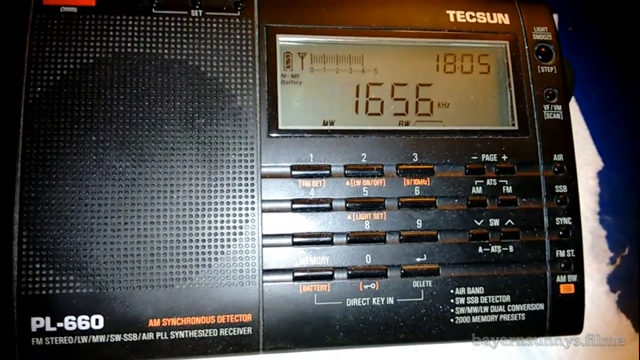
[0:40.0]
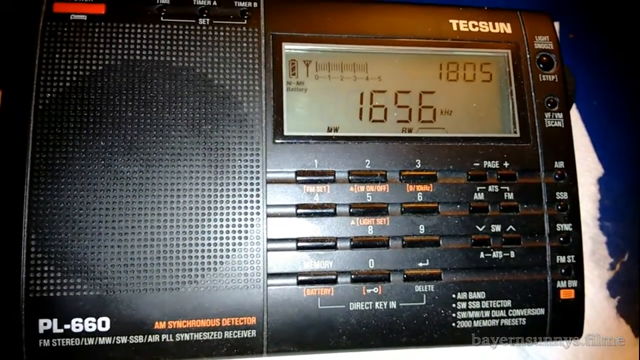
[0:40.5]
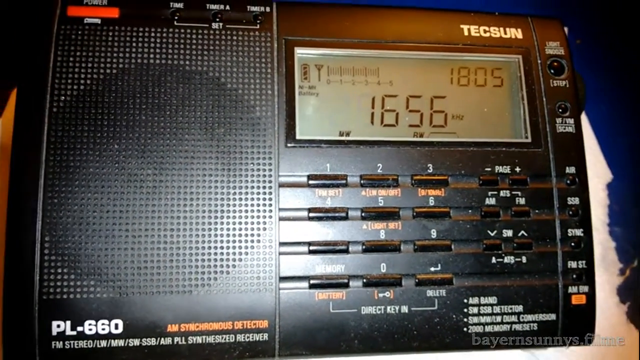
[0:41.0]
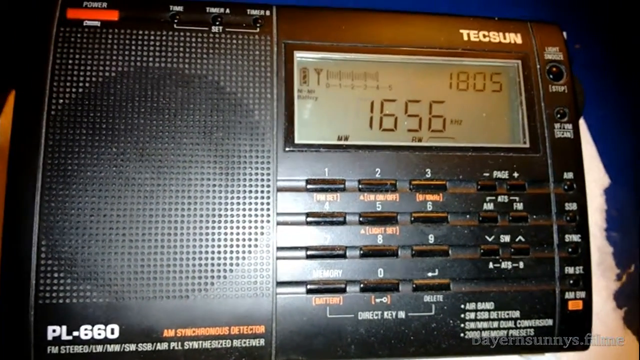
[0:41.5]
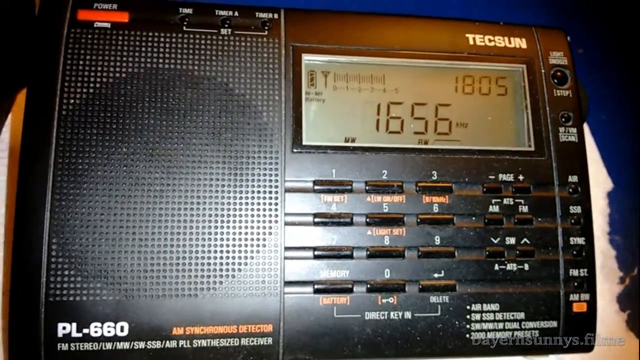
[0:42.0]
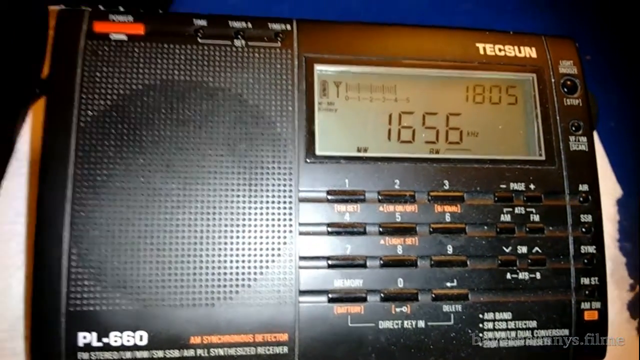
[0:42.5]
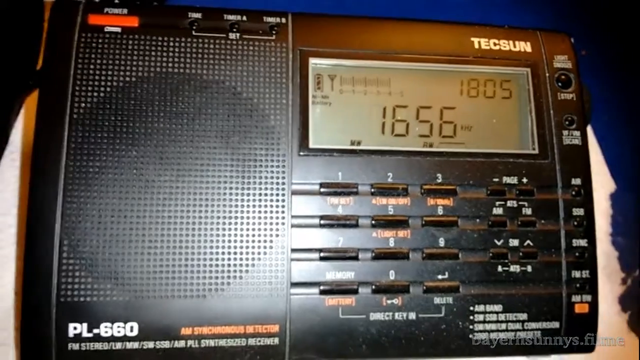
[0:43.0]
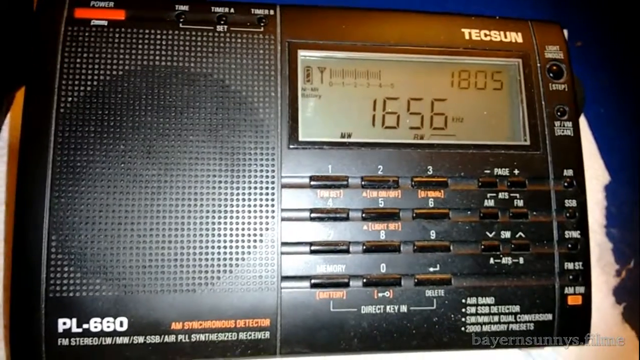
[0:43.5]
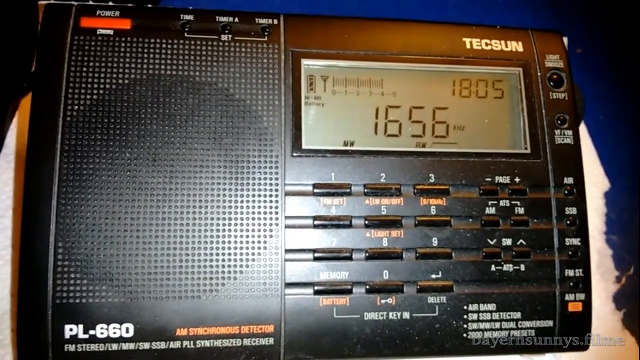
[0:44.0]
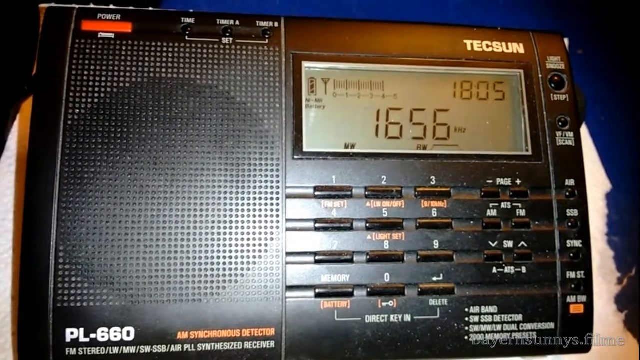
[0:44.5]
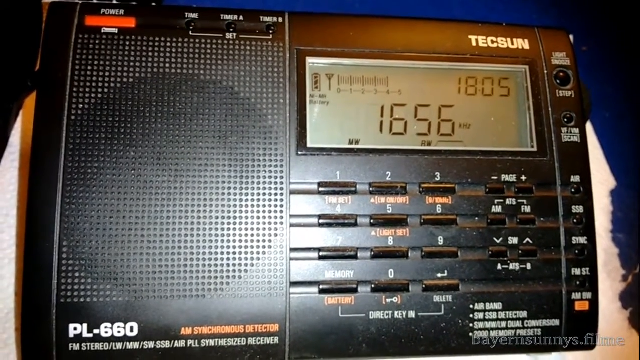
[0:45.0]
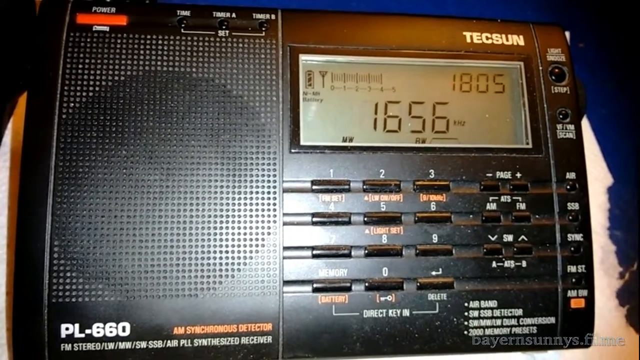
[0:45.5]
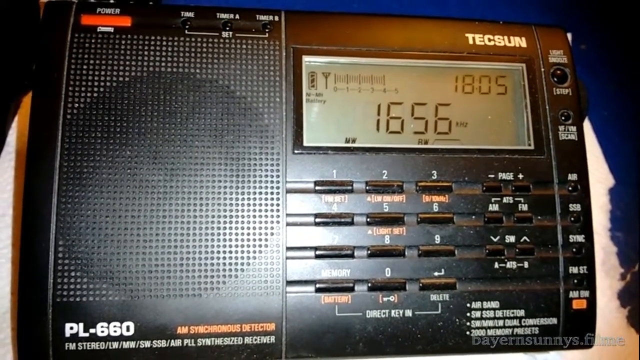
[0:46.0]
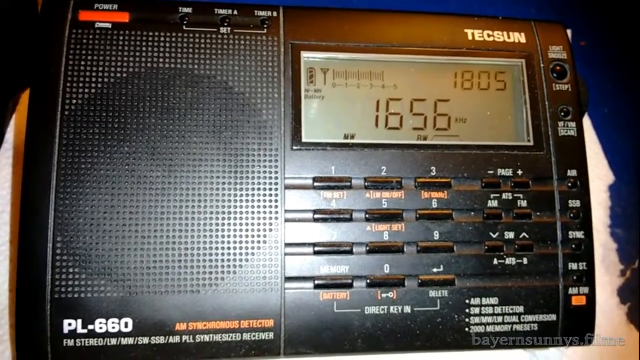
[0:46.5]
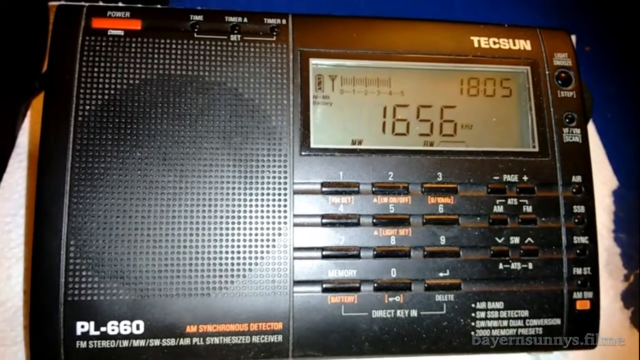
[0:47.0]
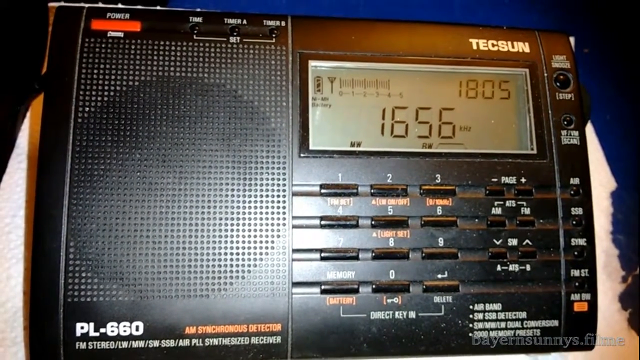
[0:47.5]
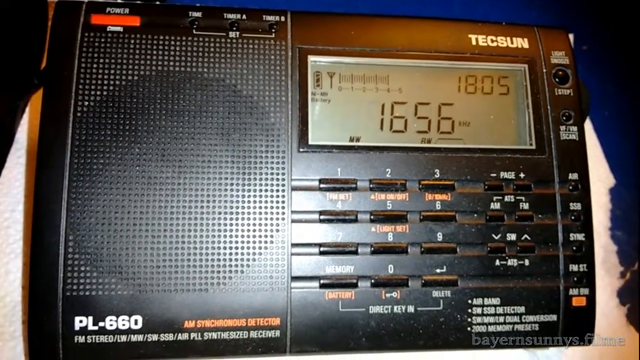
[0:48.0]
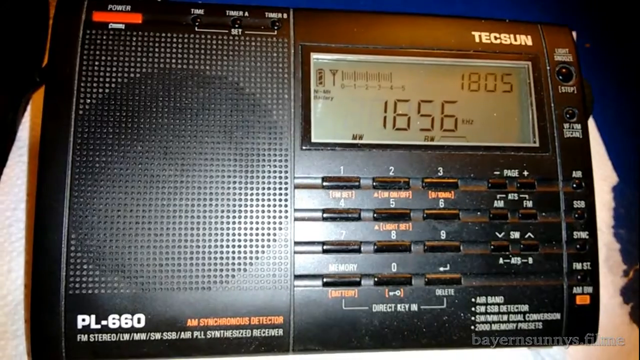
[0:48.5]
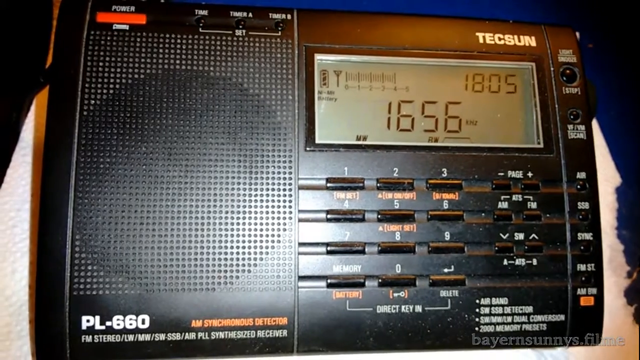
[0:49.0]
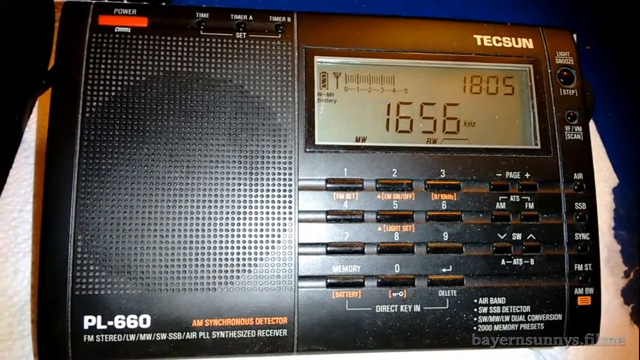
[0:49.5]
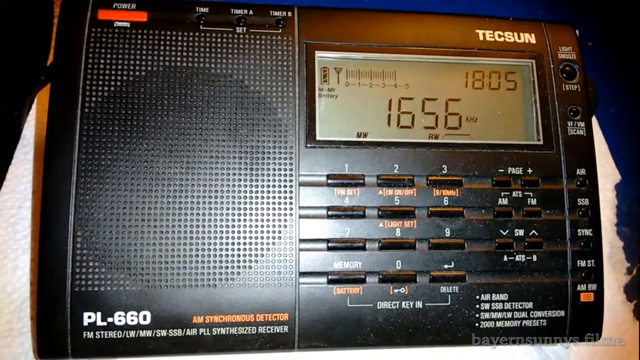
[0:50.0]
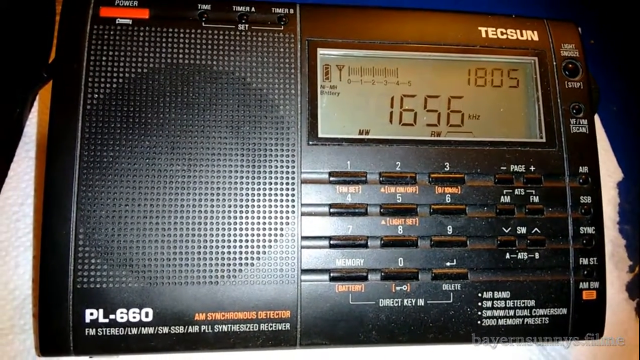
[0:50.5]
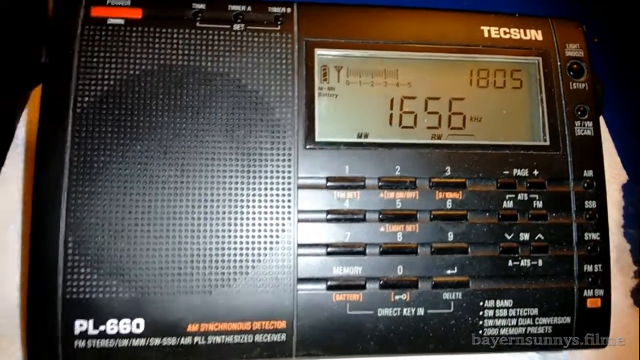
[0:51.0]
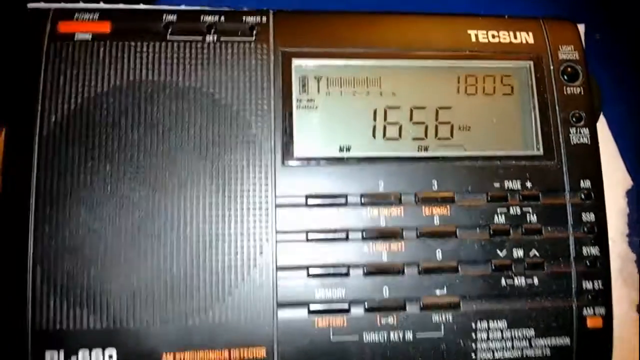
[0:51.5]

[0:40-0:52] The device, a Texan model PL660, has number buttons 1, 2, 3, 4, 5, 6, 7, 8, 9 and 0. The video stays focused on the device. A power button is in the top left corner, along with a time, timer A and timer B button, plus page number buttons, AM and FM buttons, and SW up and down arrows. Additional information about air band is at the bottom. Toward the end, the view slightly zooms in on the screen, which reads "1656" and "1805."